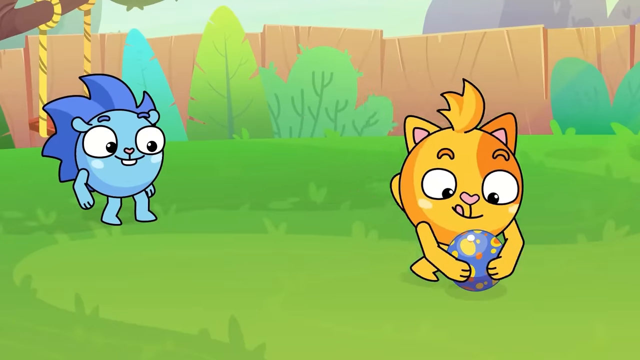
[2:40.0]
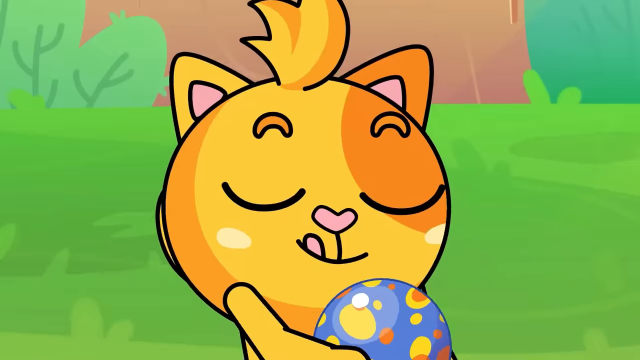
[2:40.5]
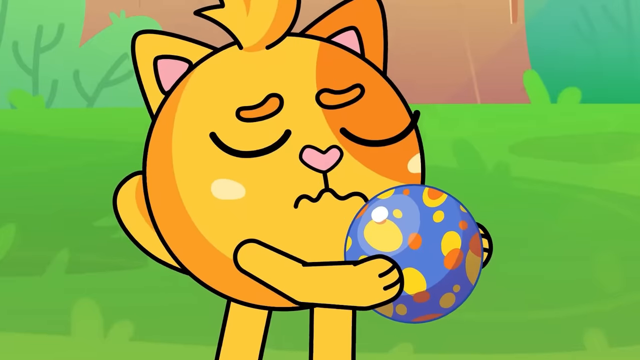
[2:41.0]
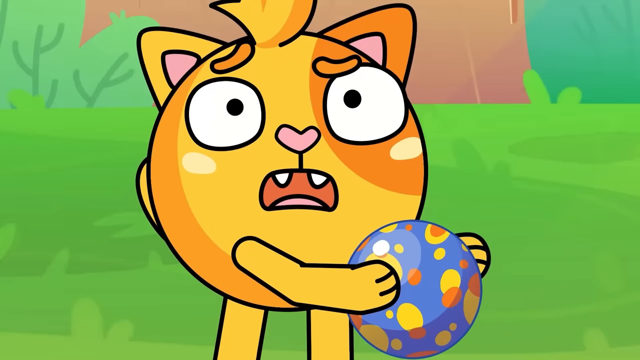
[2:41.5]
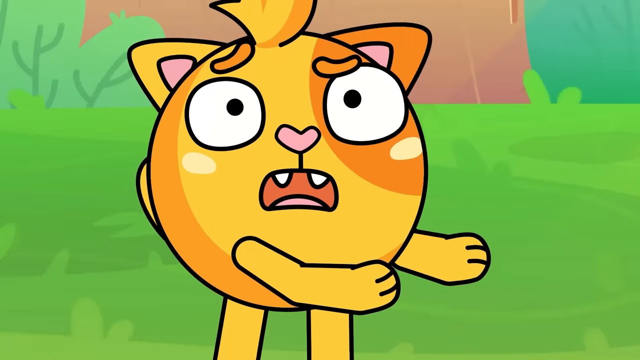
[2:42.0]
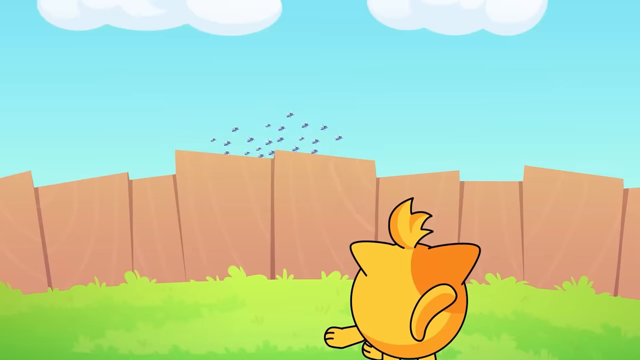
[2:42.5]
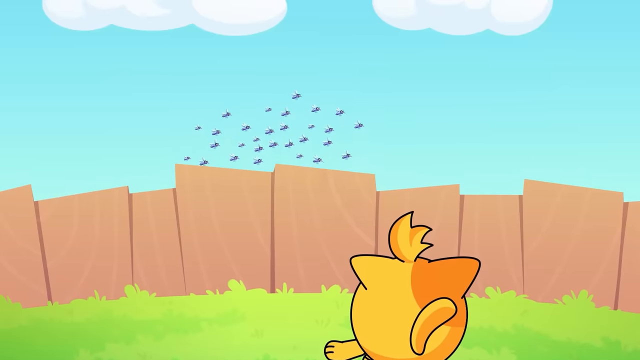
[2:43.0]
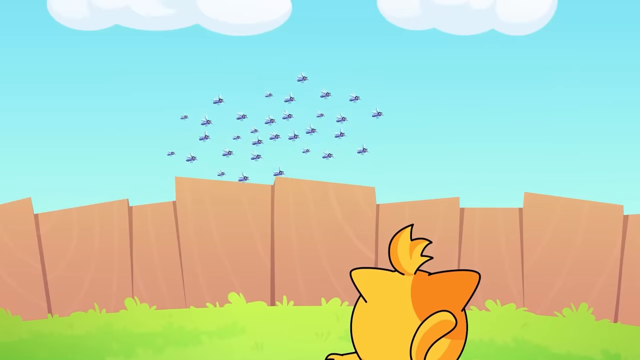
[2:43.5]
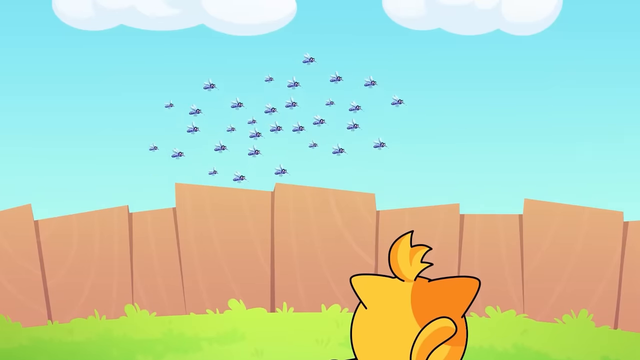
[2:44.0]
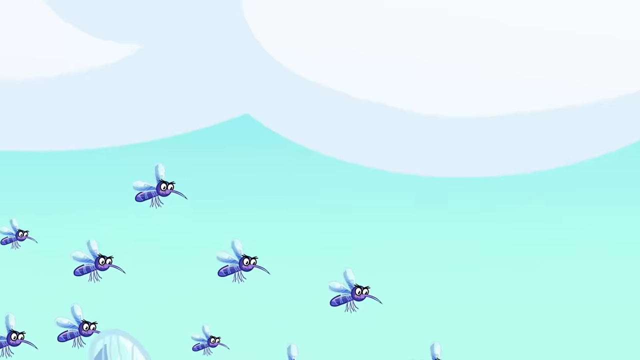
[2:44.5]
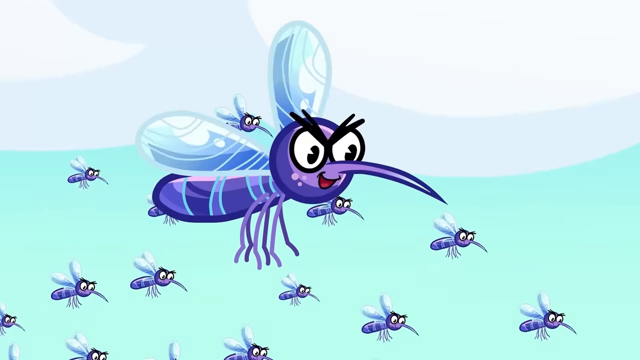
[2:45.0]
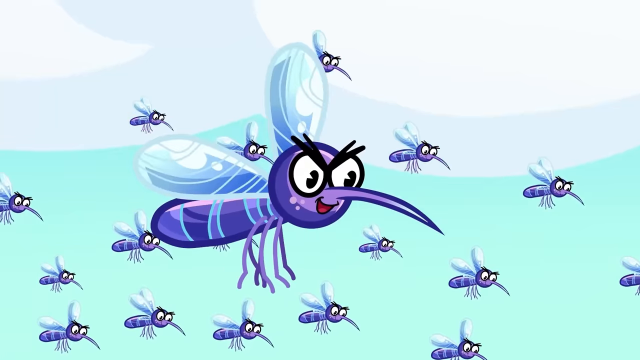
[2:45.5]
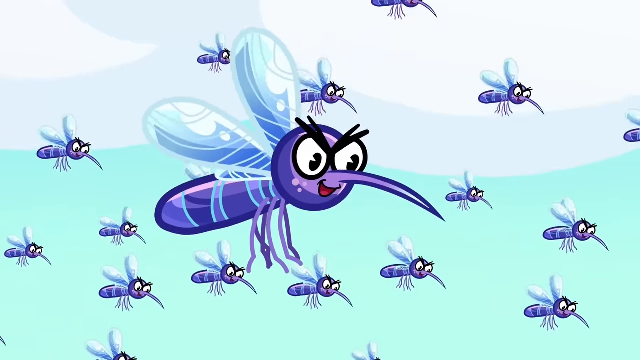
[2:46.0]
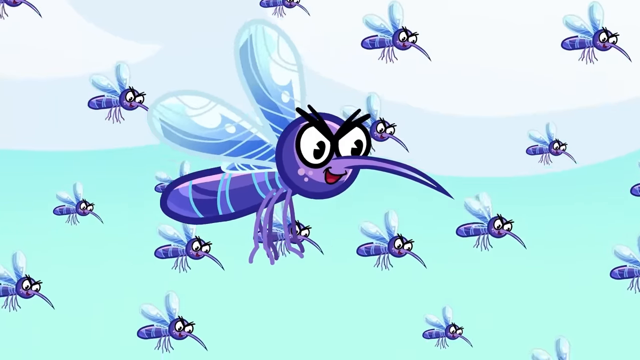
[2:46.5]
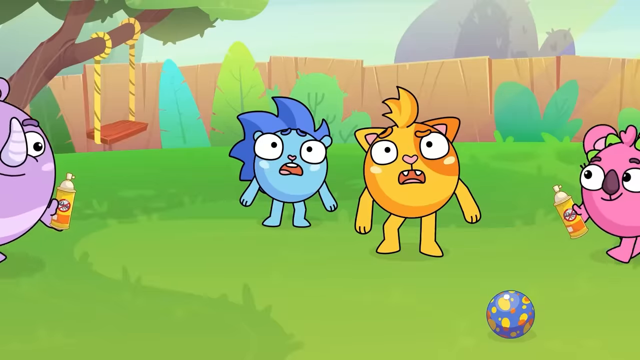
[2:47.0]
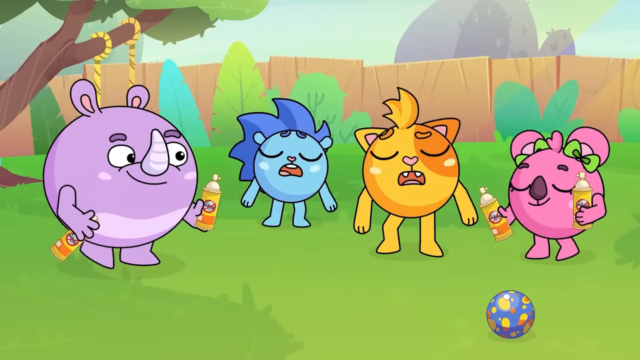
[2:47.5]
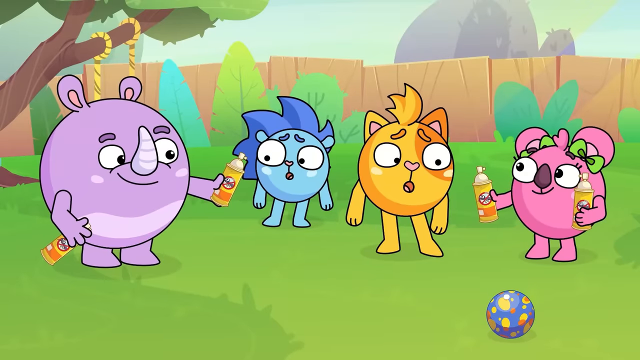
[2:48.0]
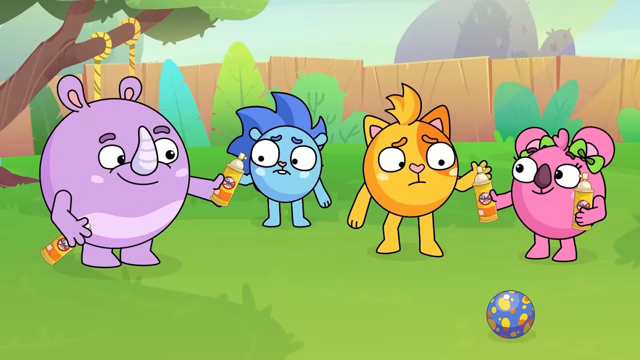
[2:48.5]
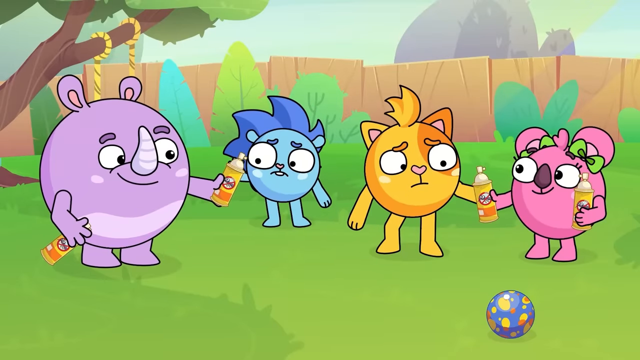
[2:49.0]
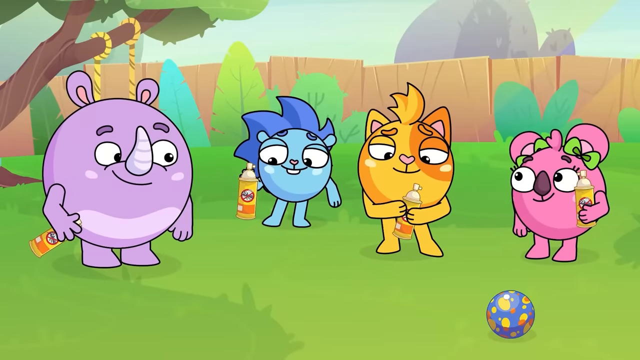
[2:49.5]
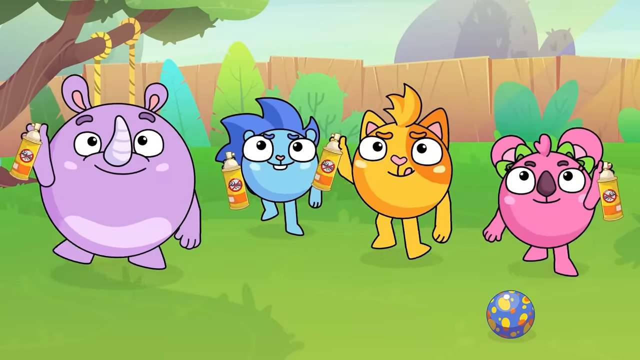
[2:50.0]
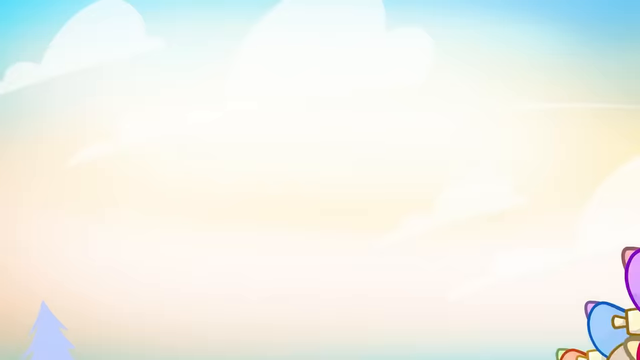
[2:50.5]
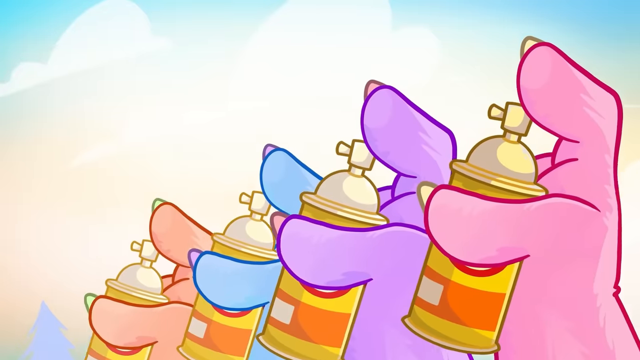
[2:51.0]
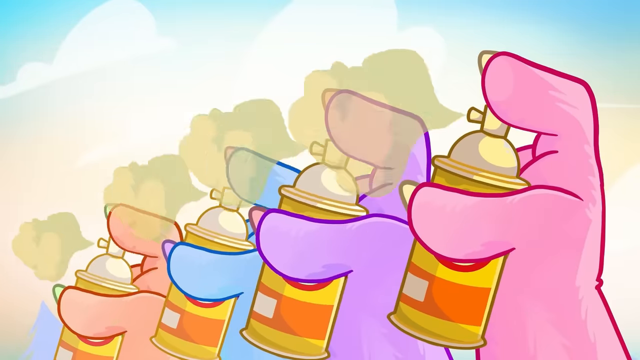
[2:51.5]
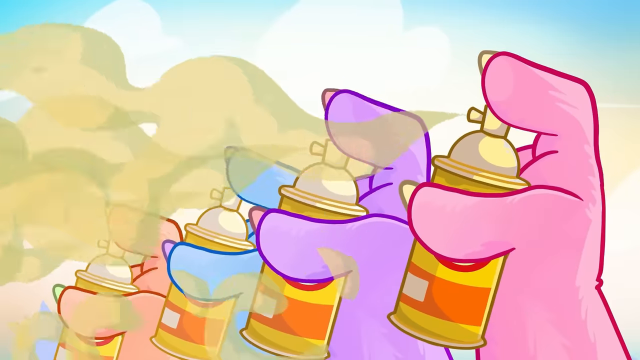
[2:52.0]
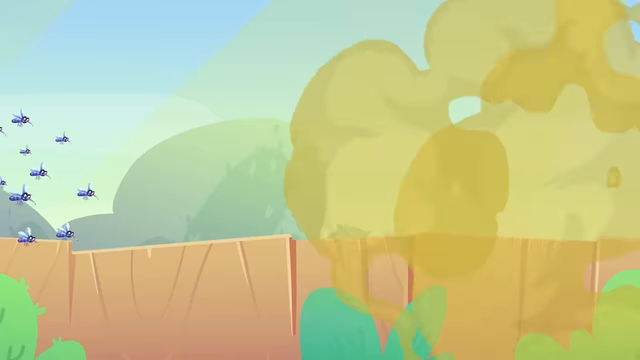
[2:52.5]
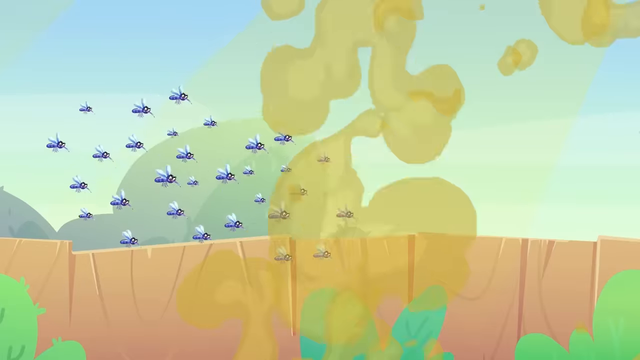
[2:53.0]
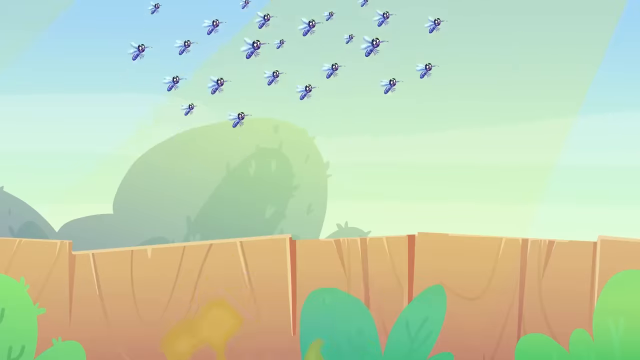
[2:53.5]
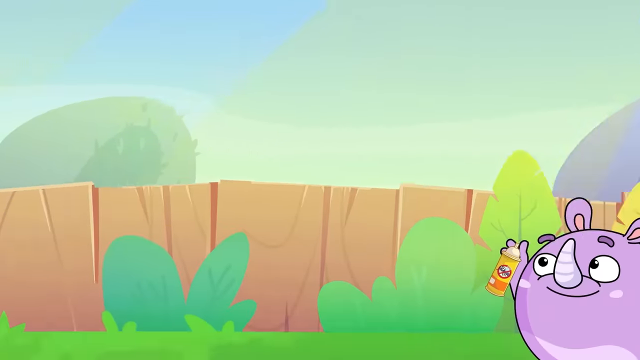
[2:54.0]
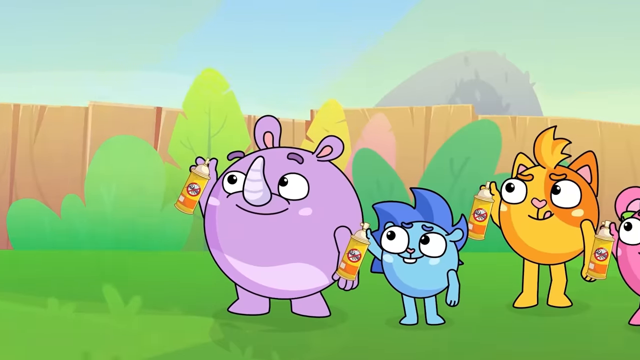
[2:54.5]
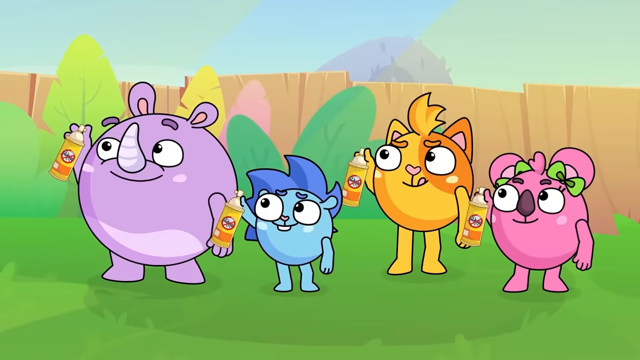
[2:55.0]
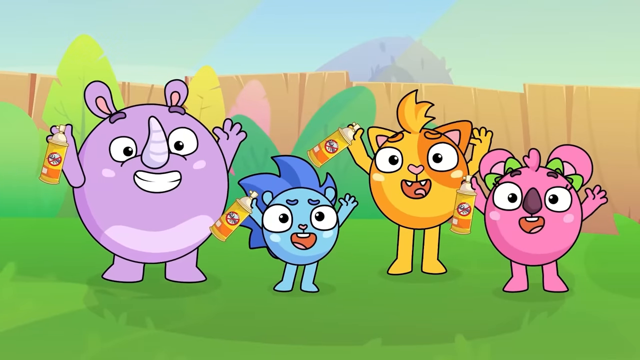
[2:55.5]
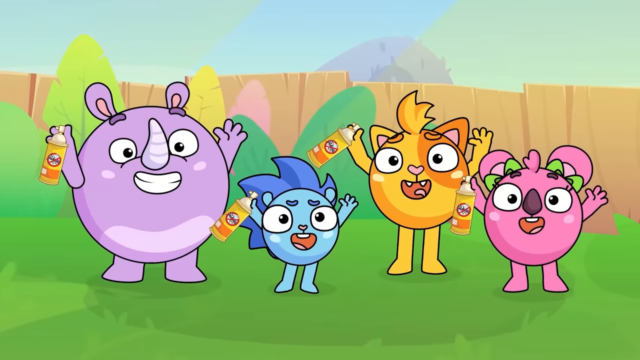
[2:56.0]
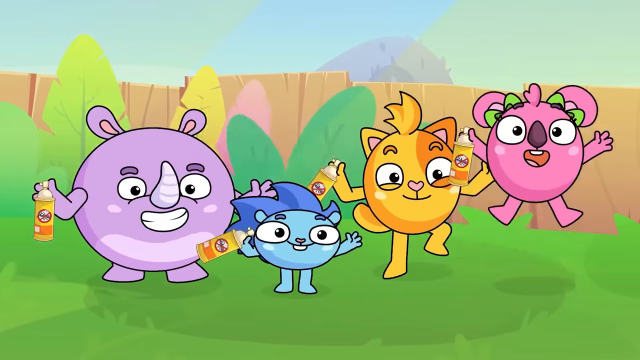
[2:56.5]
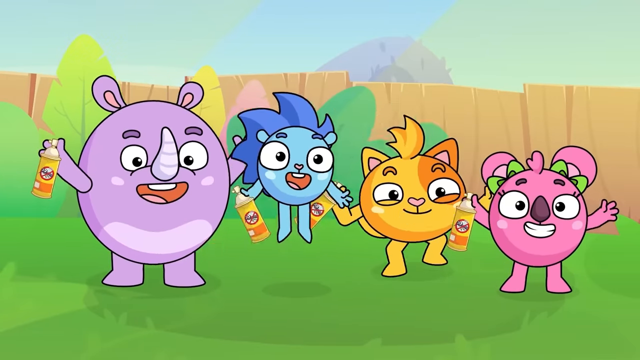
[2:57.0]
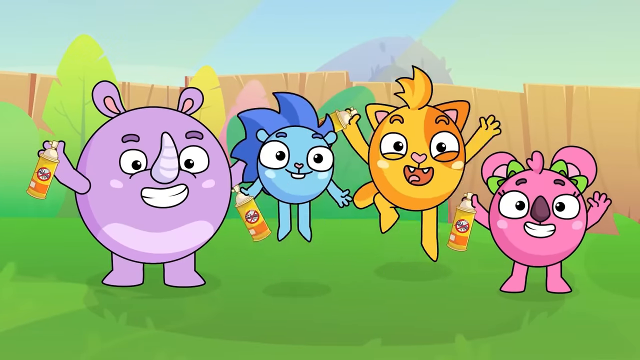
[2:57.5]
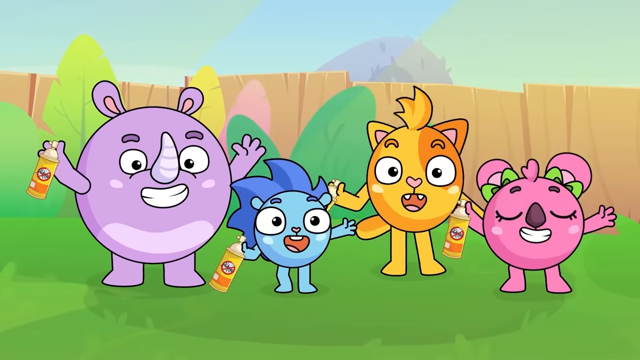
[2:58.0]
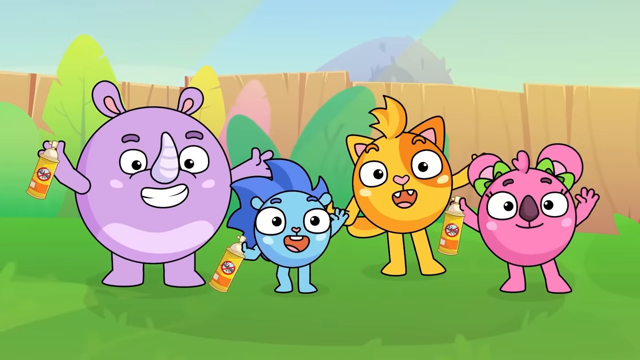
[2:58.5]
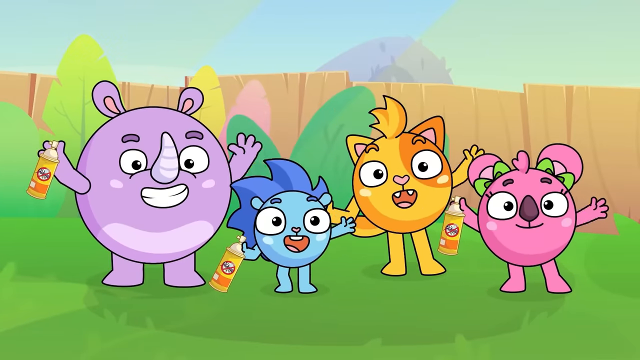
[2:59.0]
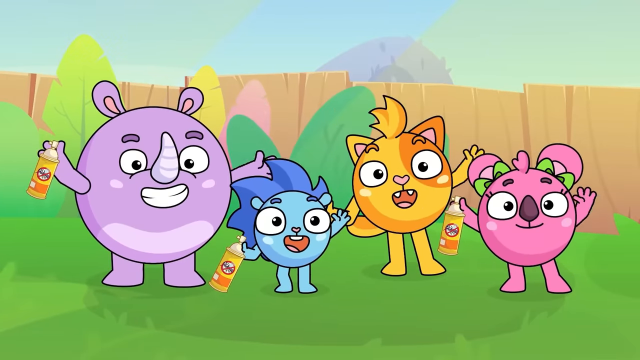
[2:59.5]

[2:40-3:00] A swarm of mosquitoes comes in, and the children are afraid. A blue cat and a yellow cat are afraid but grab cans of anti-mosquito spray. There is a purple rhino character, the blue porcupine character, the yellow cat and a pink little critter, with green grass fields, a plank fence, a swing with rope and a tree. Spray is sprayed at the mosquitoes, and the characters put their hands in the air, cheer, dance and wave goodbye as if to the audience. The characters have mostly simple designs with circles for eyes, and they hold up cans made of cylinders with sprays. Each character's fingers are exactly the same, just in different colors, with colored nails: a pink hand with yellow nails, a purple hand with red nails, a blue hand with purple nails and a red hand with yellow nails. They spray mist into the clouds, and the mosquitoes go away.